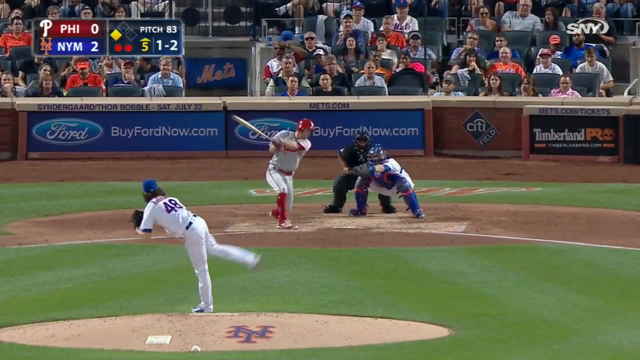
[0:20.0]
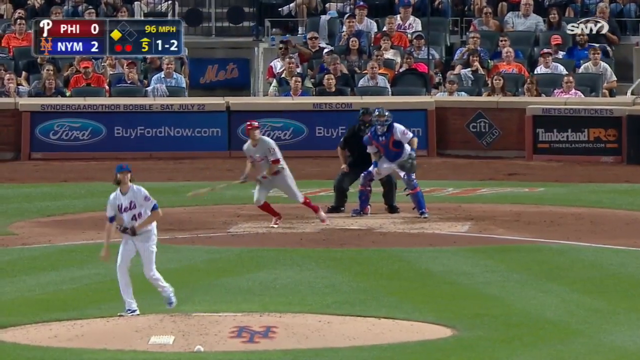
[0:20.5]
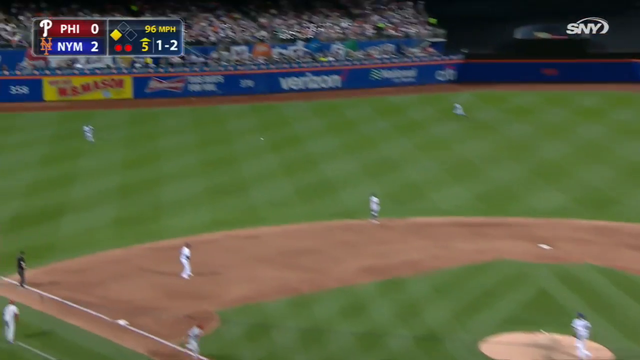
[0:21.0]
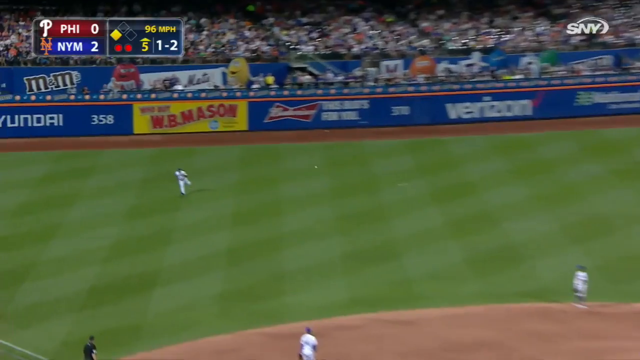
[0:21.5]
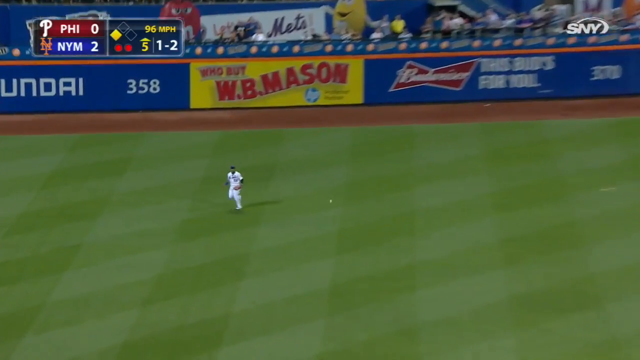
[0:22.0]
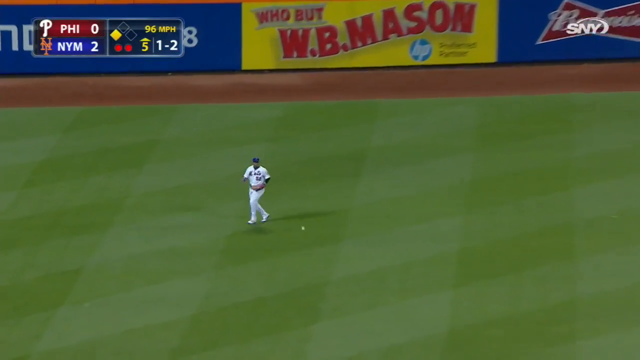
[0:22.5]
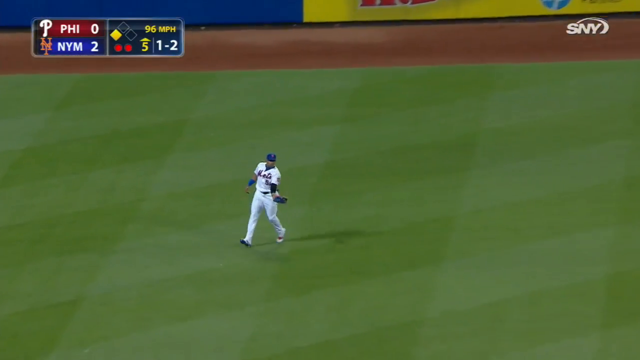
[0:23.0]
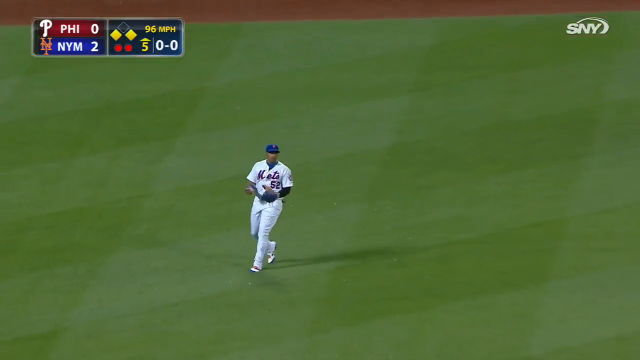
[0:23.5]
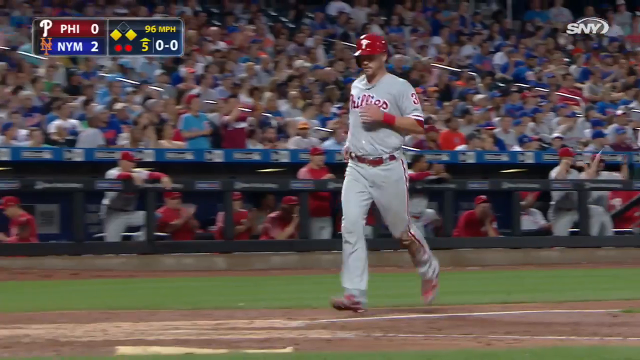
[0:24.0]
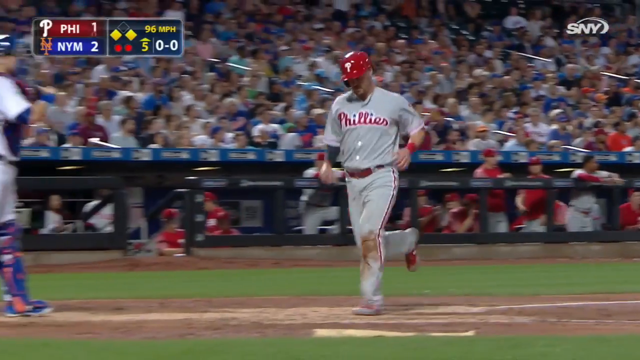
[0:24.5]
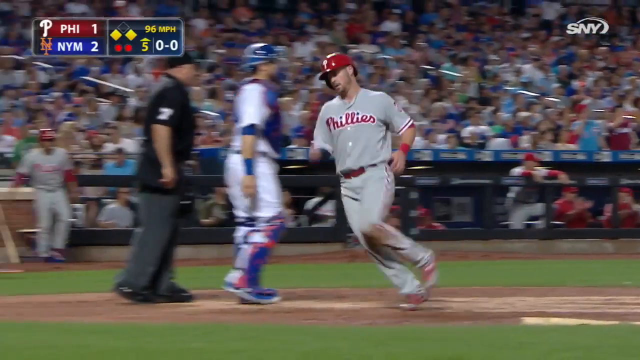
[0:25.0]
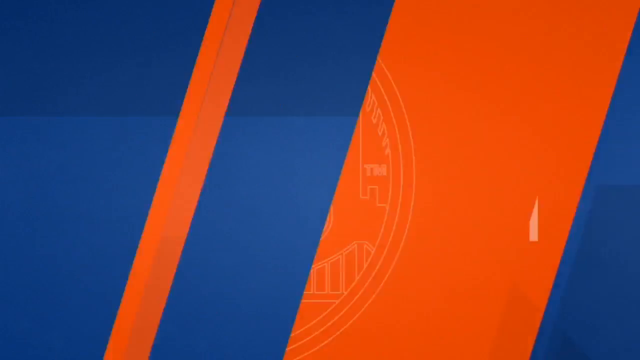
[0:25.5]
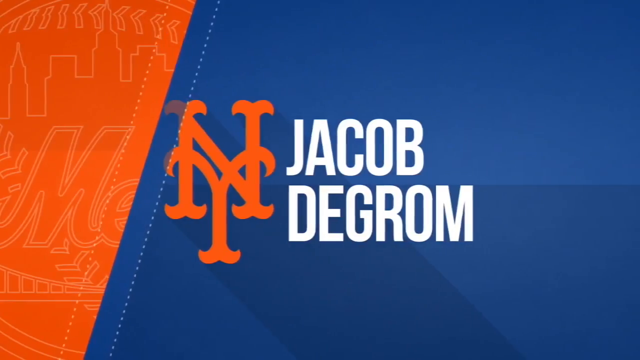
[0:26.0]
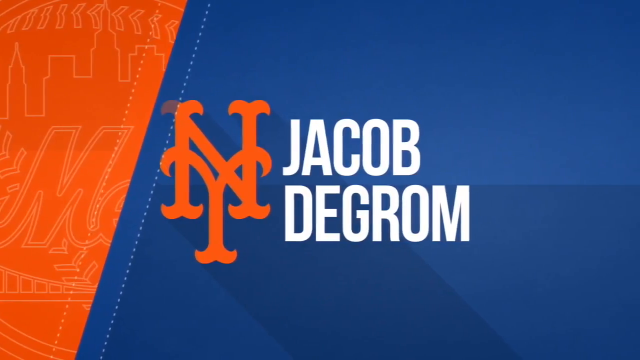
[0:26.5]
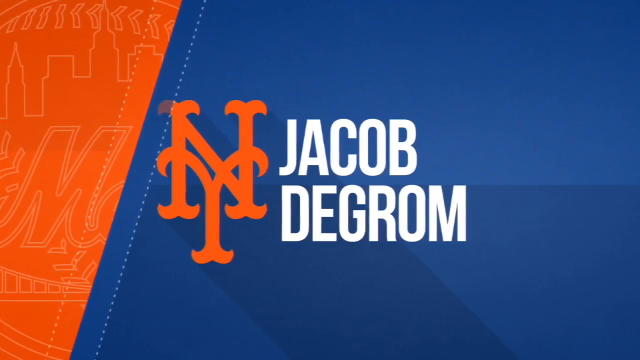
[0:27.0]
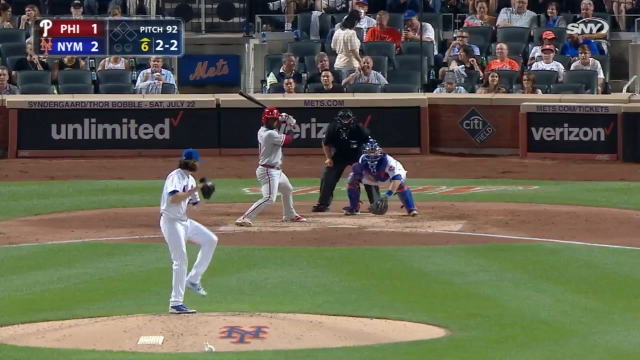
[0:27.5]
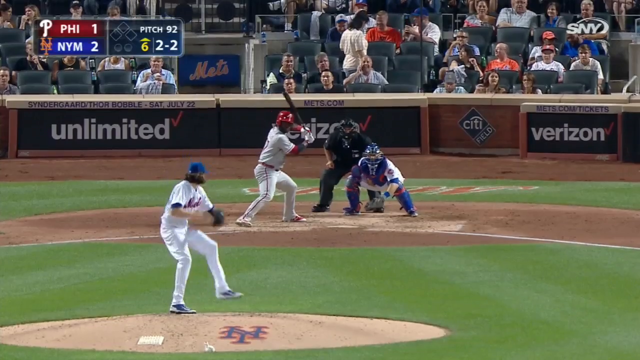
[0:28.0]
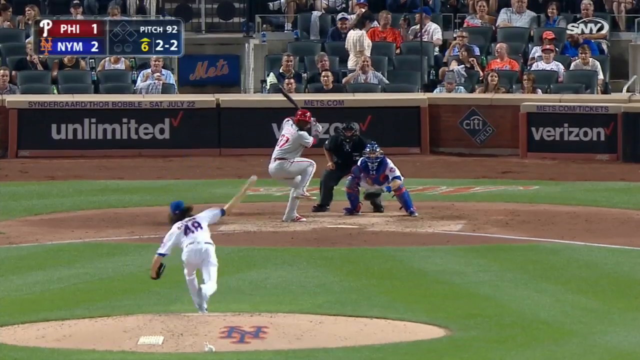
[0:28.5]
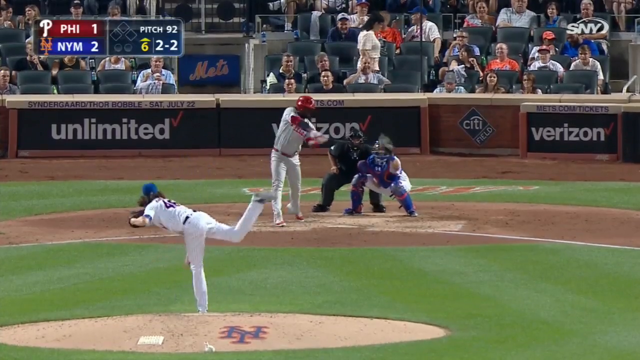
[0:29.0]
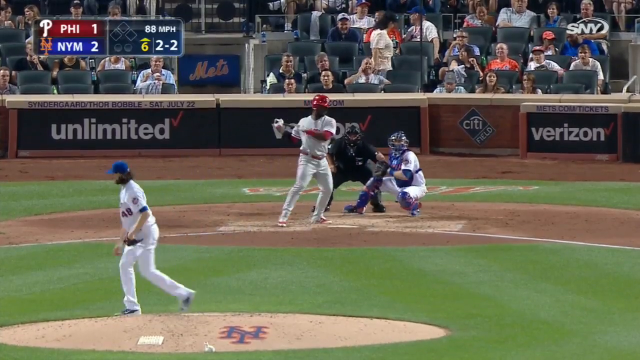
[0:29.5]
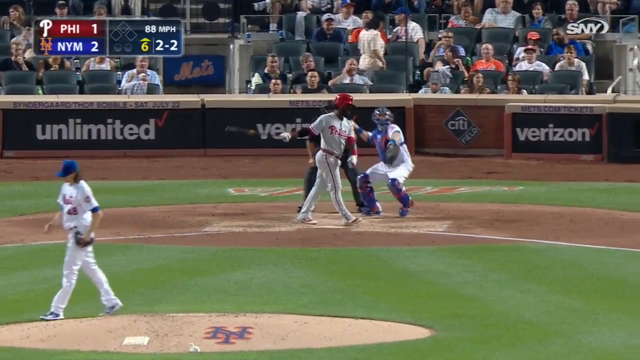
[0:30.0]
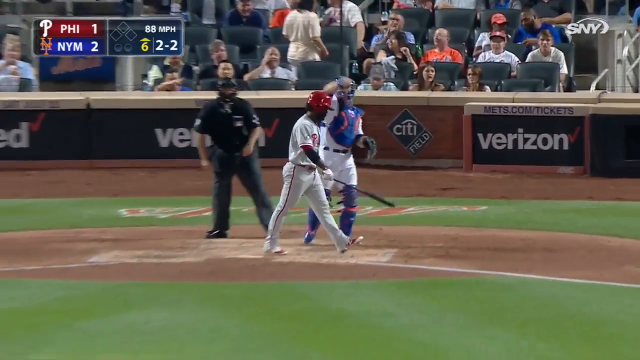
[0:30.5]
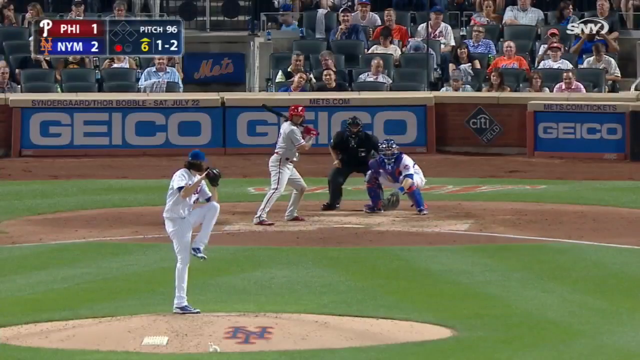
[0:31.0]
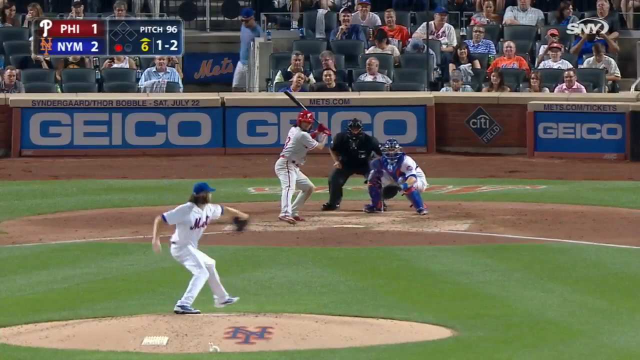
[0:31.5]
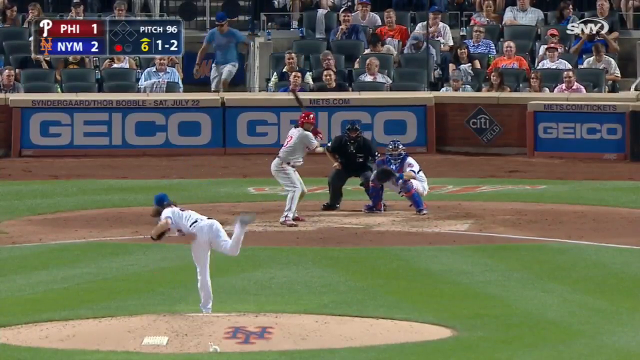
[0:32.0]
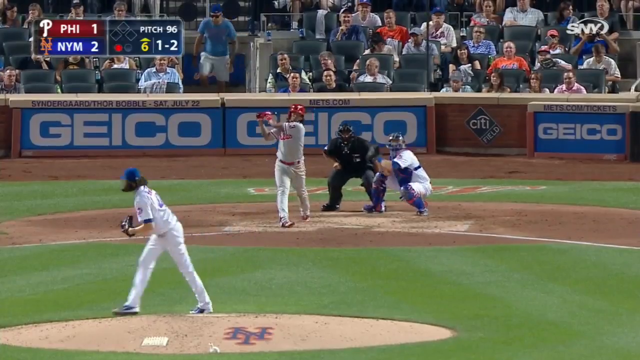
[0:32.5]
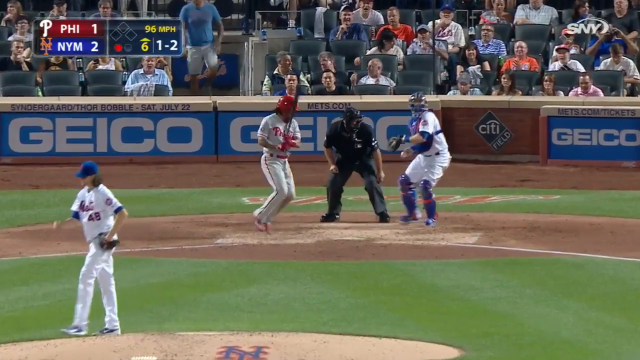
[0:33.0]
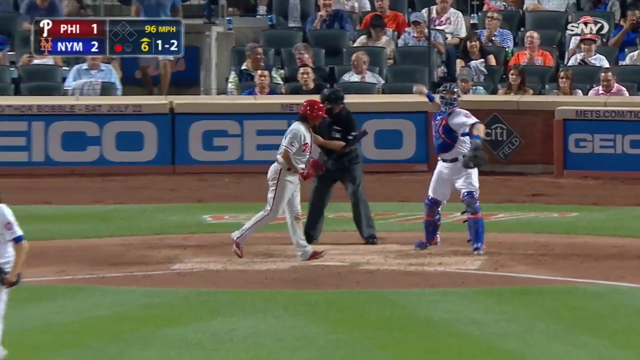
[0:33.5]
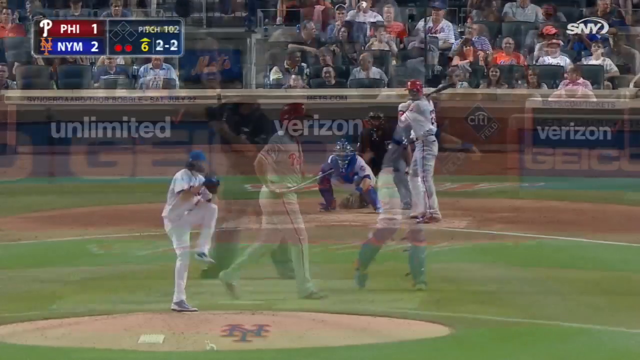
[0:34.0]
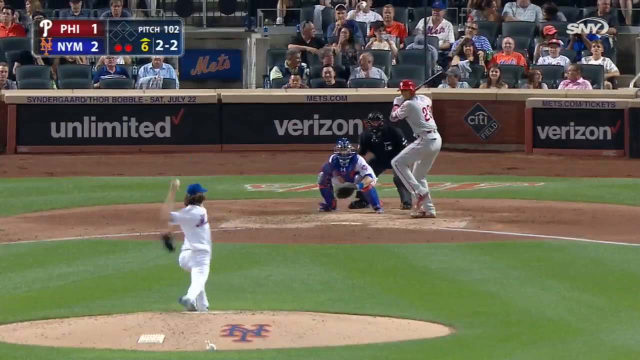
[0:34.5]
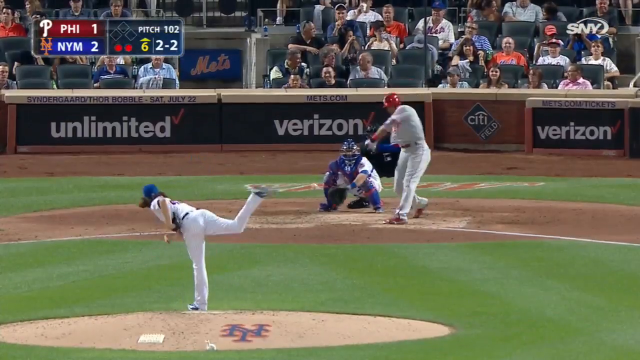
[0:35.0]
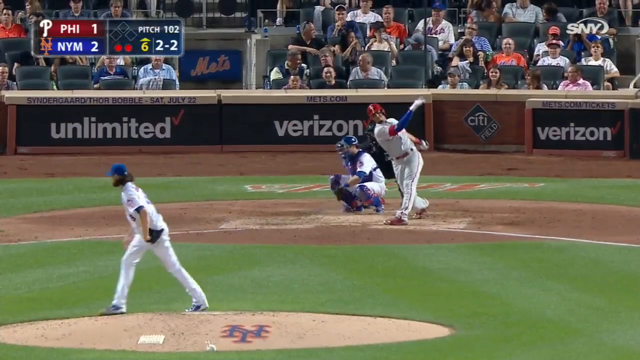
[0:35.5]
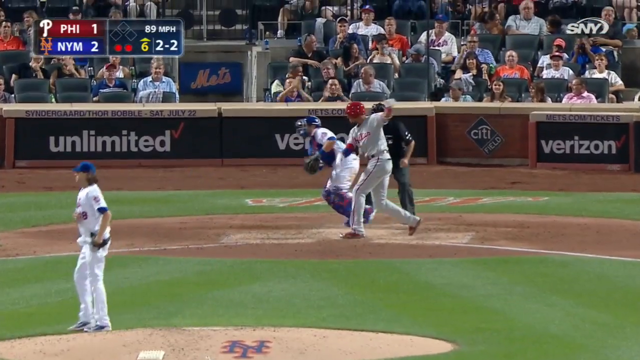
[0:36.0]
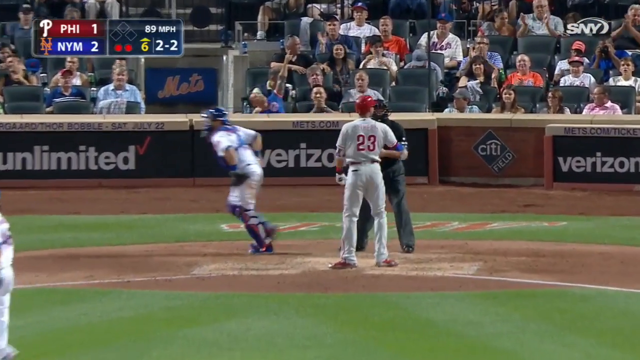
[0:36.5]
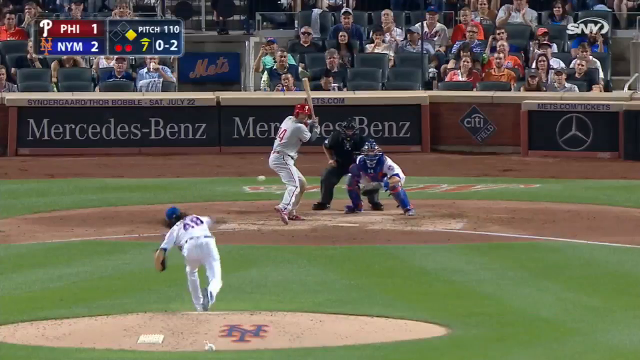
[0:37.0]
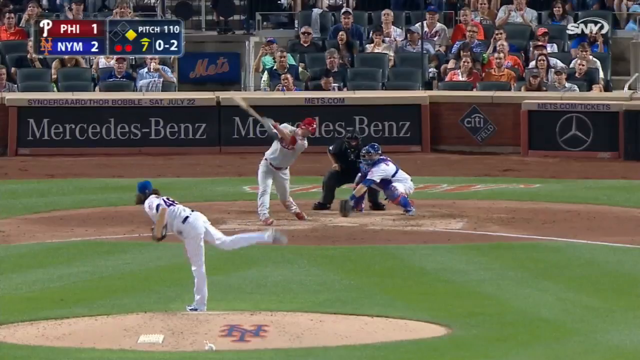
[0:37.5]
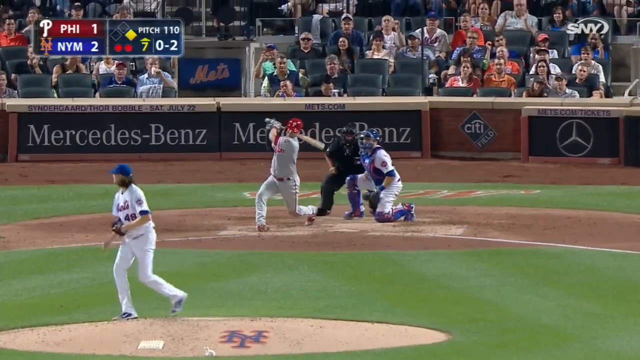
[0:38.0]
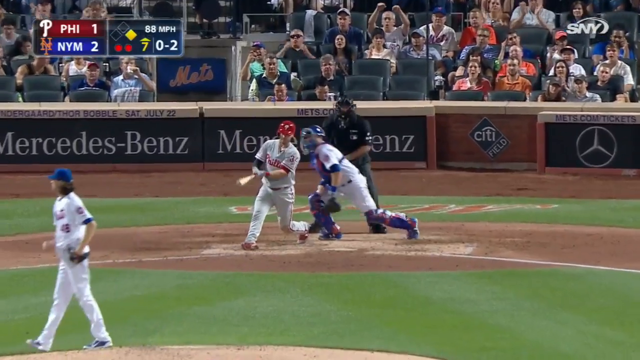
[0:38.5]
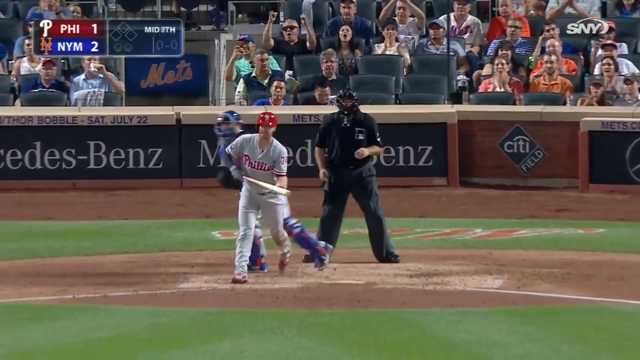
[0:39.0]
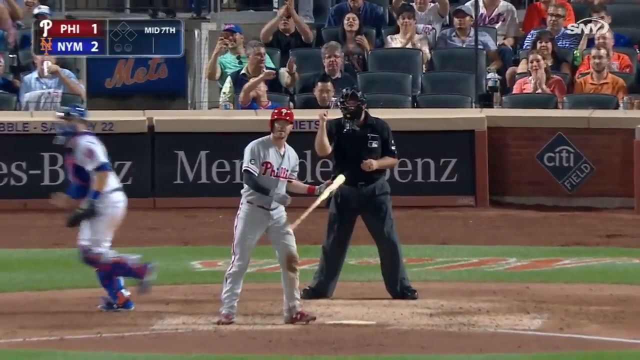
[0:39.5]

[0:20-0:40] A pitch is followed by the ball being grabbed by a Mets outfielder in left field, and a Phillies player runs to a base. The video then turns to a highlight apparently focused on a Mets player named Jacob DeGrom, with a logo shown, followed by more pitching; DeGrom appears to be the Mets pitcher. The score is 2-1 with the Mets still ahead, in the top of the sixth inning. A Phillies batter strikes out. Two different plays are shown, one in the fifth inning and one apparently in the sixth.